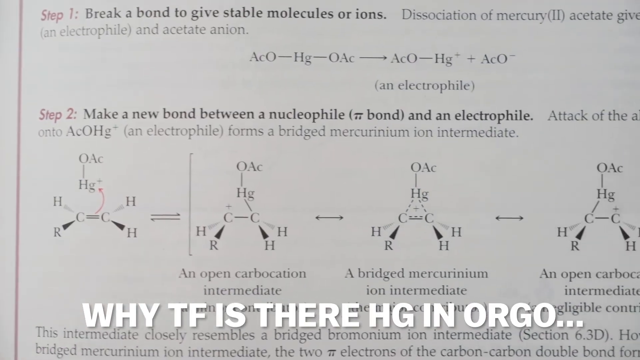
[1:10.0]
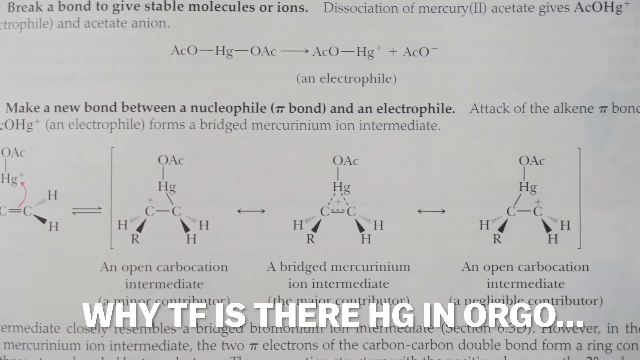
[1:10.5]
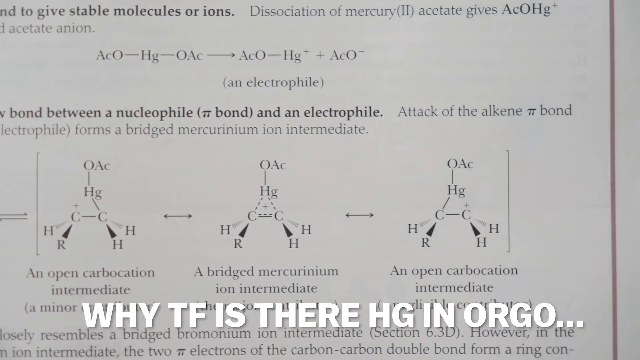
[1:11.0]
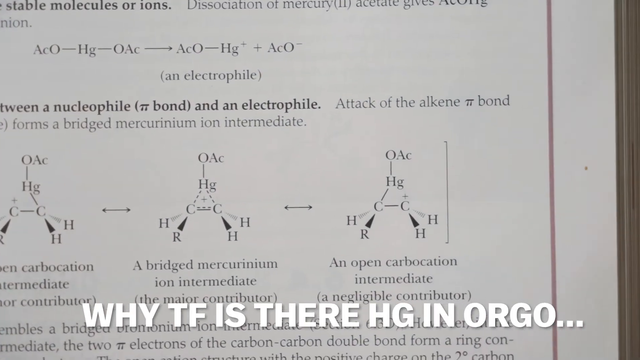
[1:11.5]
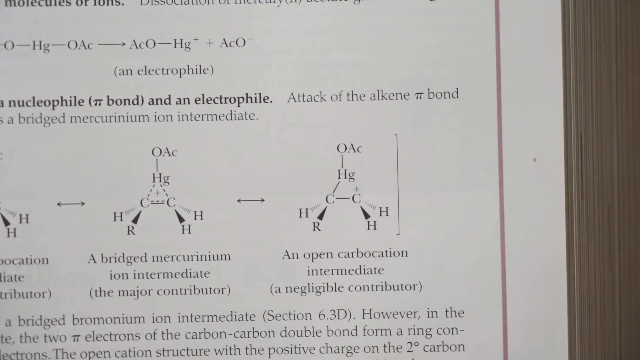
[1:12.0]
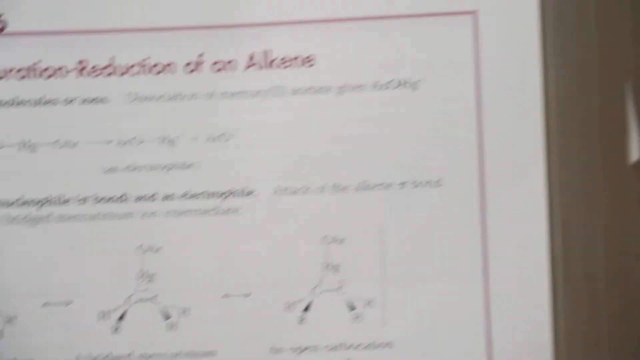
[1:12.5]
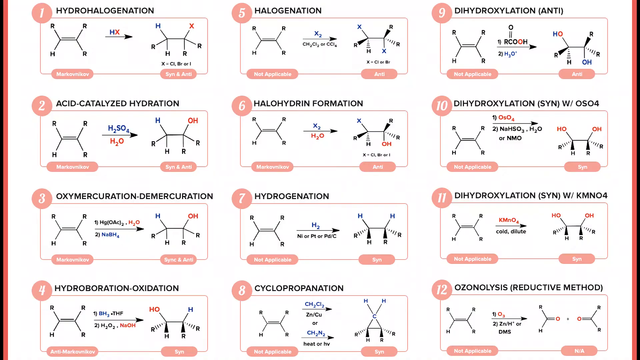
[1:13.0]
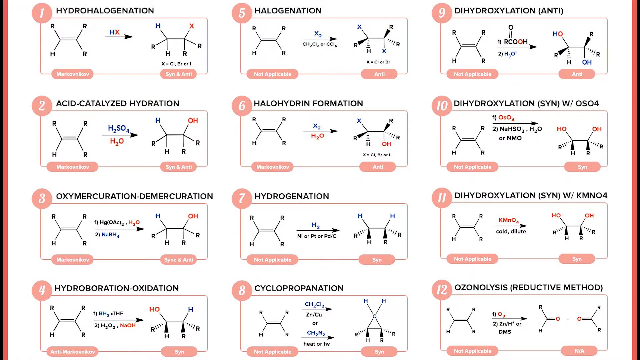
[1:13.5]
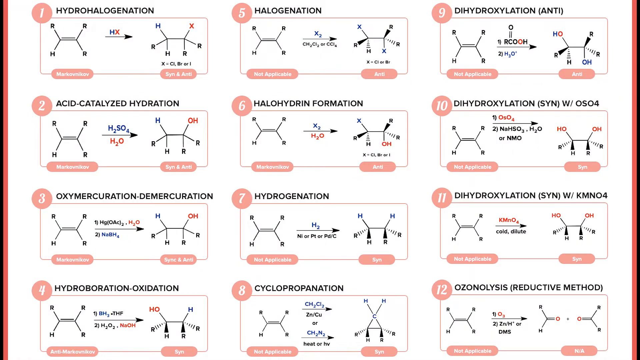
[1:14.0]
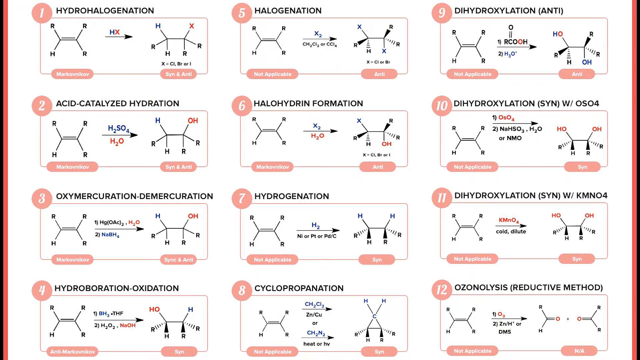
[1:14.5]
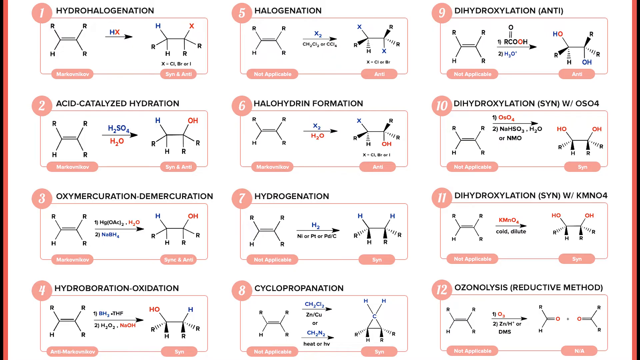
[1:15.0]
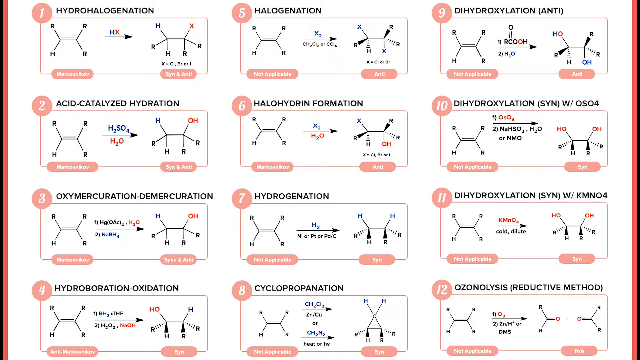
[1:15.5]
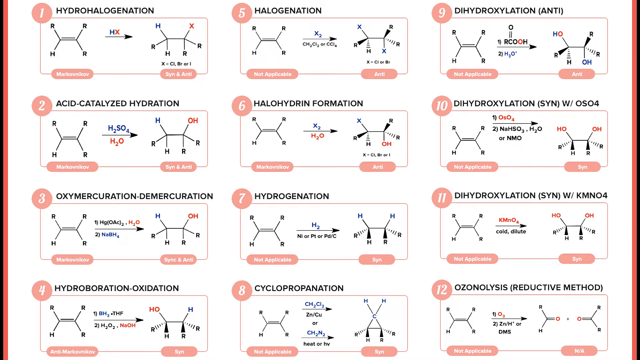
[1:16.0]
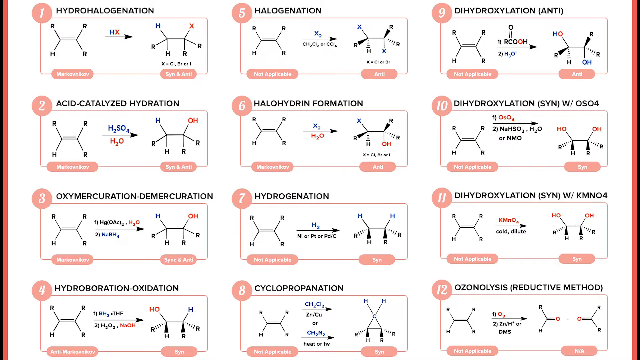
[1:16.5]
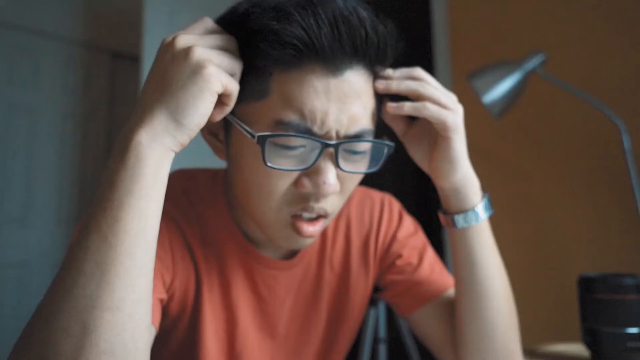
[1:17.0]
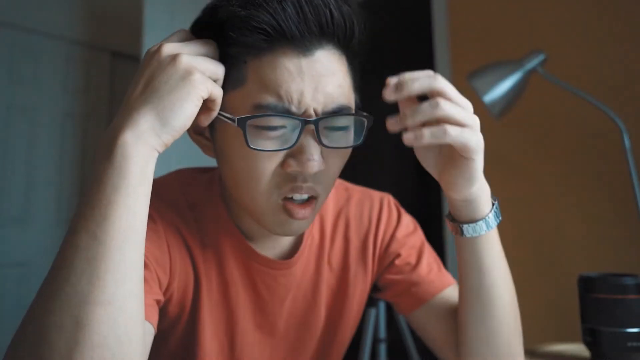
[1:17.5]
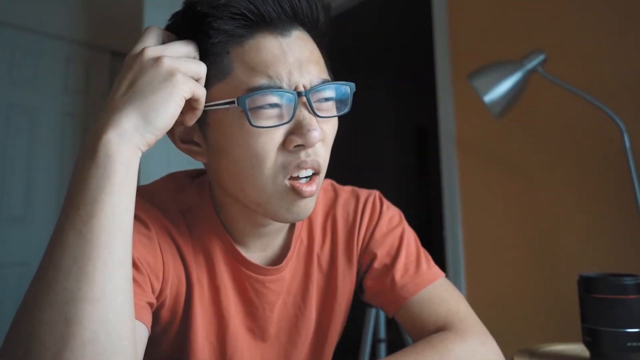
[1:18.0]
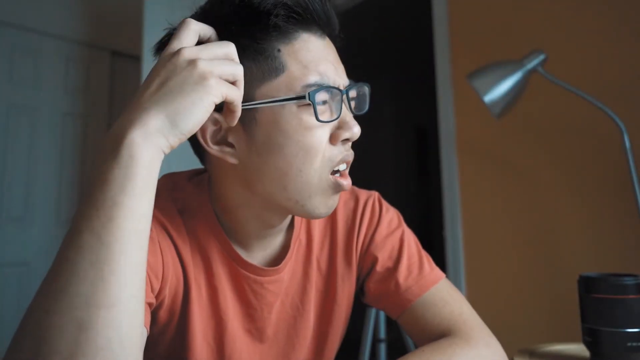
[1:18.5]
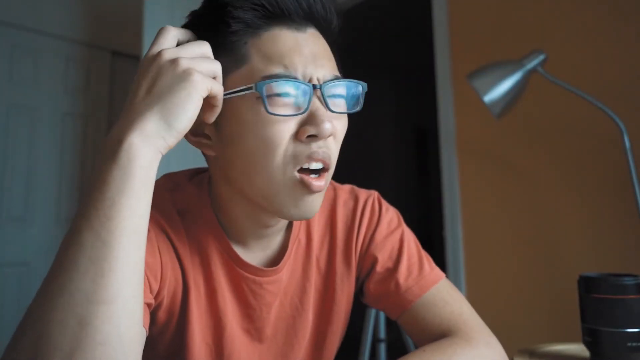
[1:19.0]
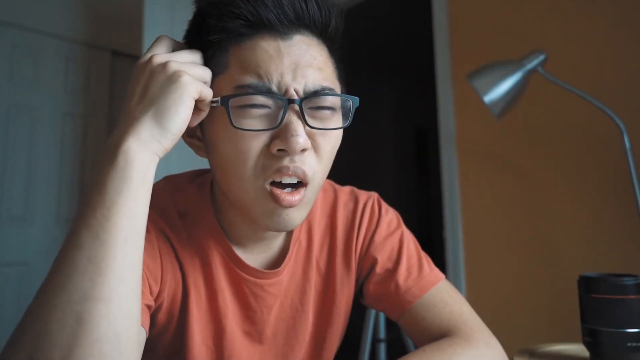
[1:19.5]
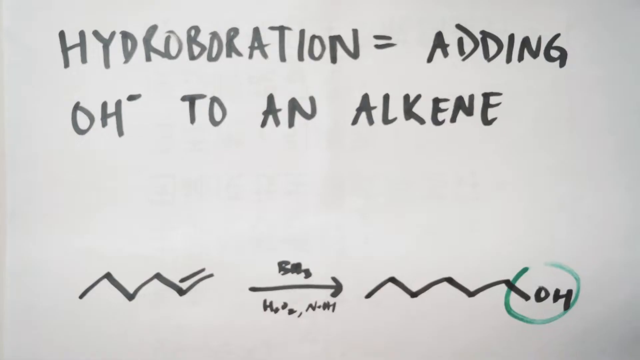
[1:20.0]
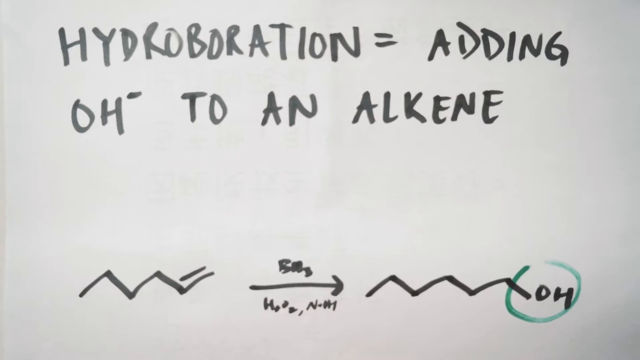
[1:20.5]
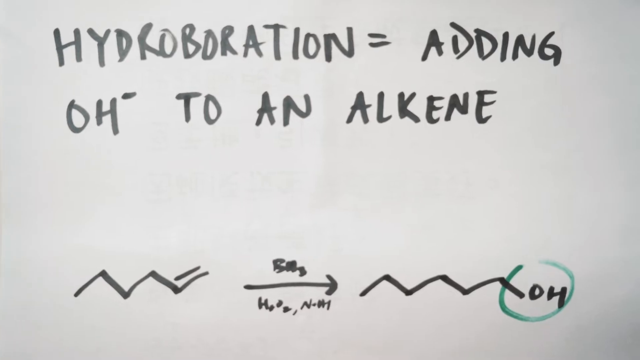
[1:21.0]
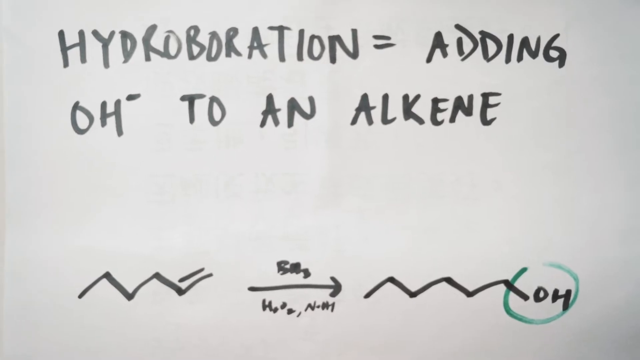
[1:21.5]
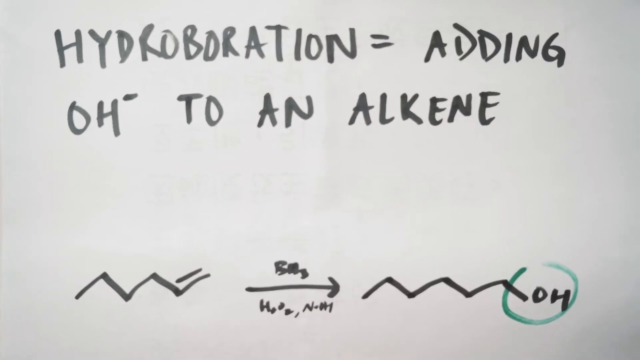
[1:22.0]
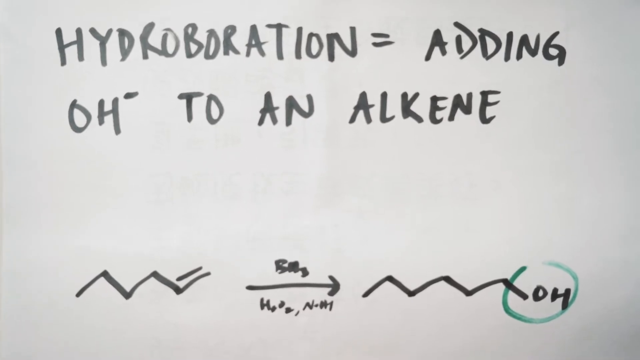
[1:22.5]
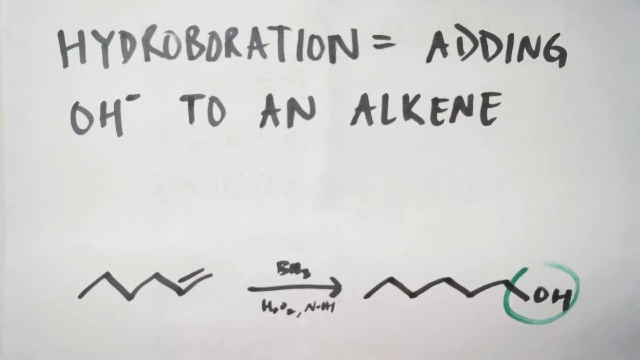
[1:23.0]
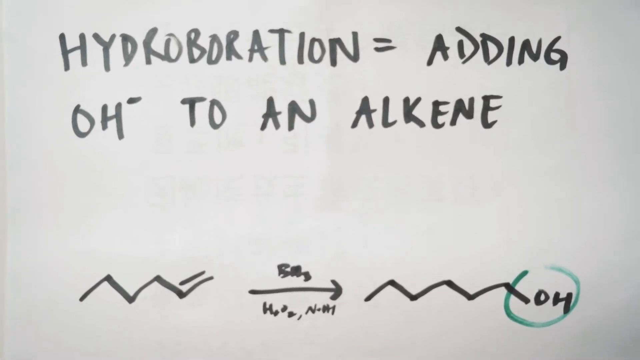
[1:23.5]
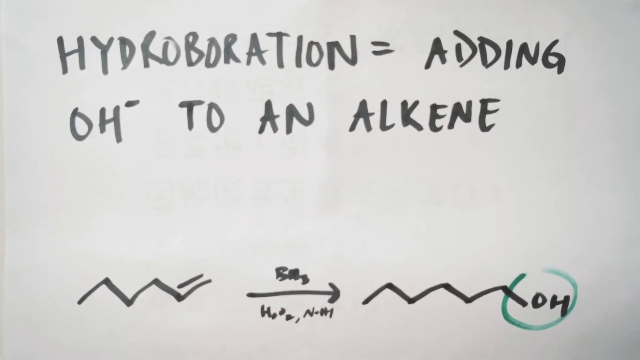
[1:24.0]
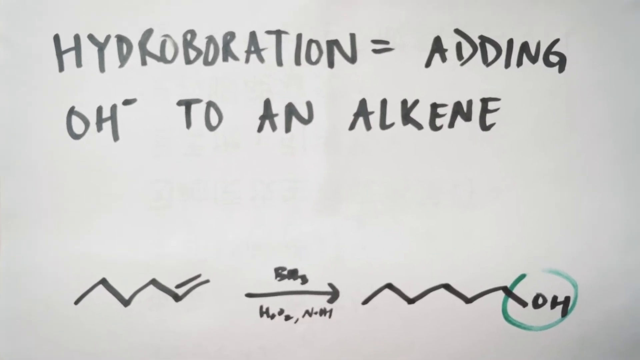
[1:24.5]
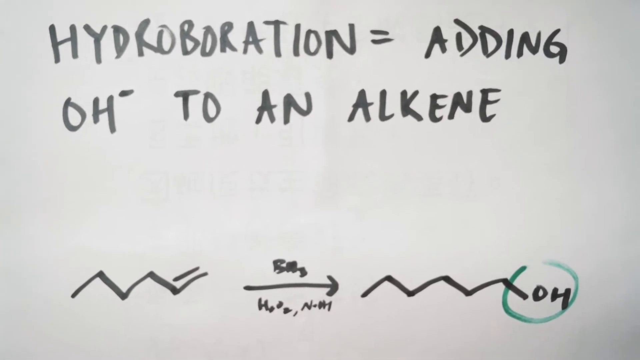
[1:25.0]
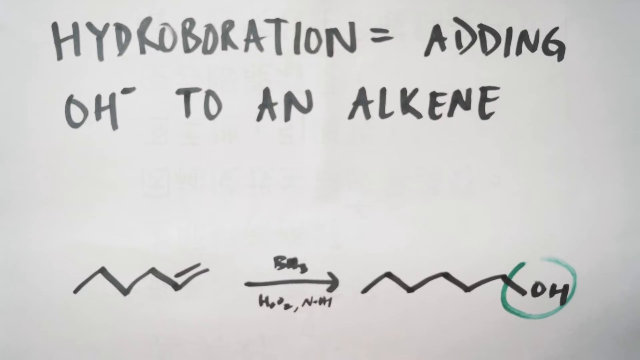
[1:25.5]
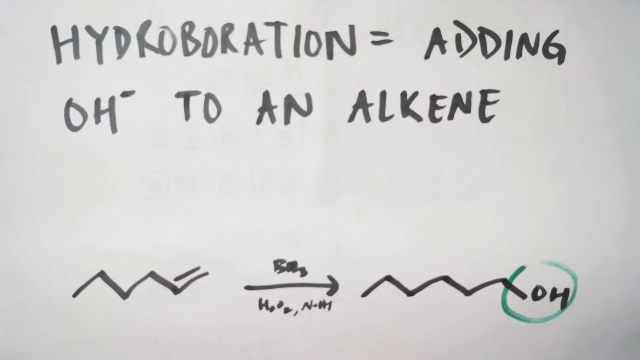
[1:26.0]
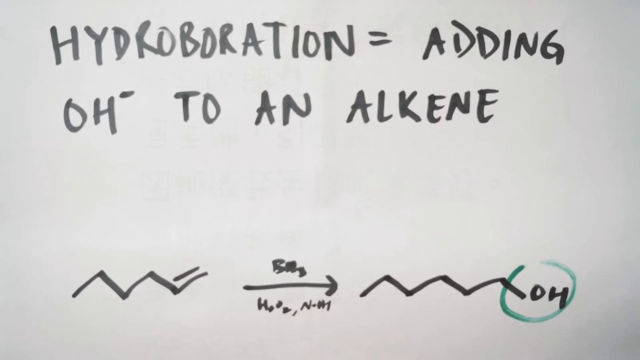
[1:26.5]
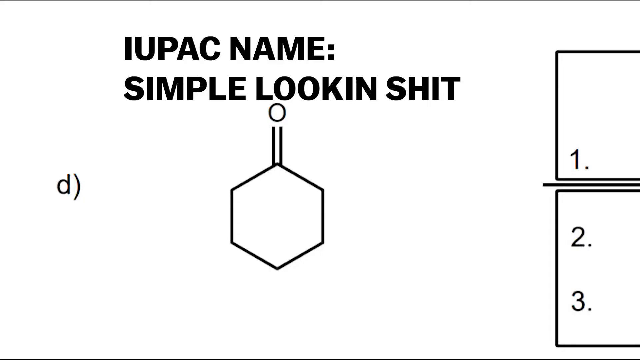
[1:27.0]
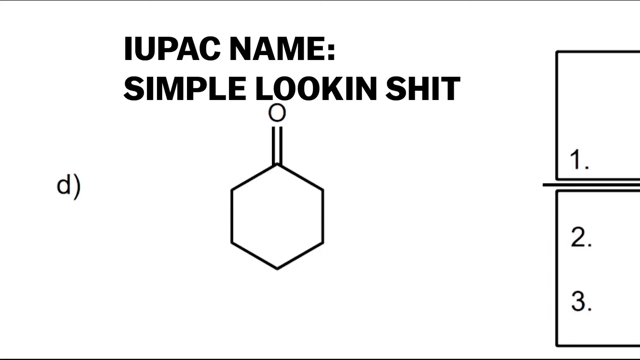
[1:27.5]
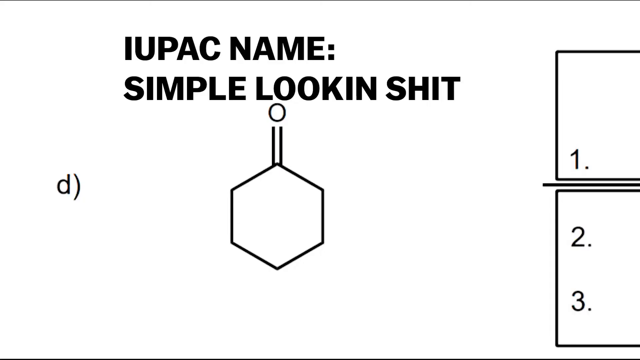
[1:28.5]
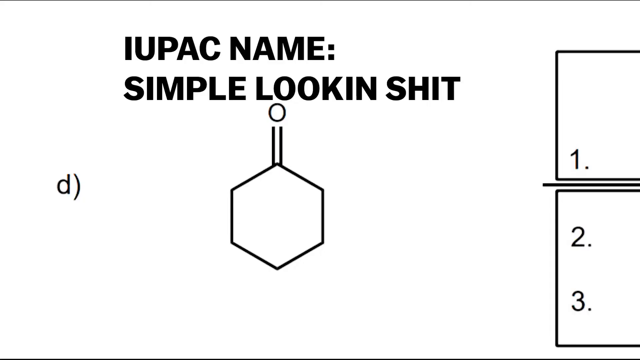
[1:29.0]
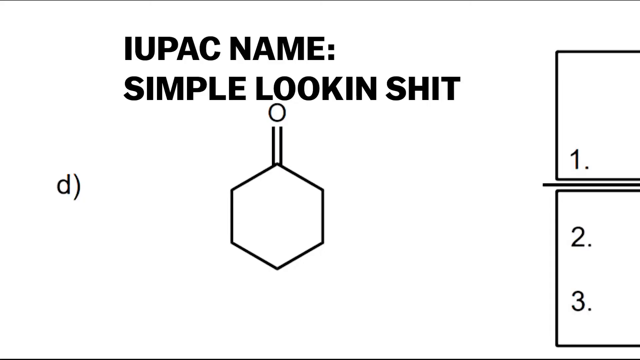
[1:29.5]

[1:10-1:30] The question "why the fuck is there Hg in orgo" is on screen, and the student seems confused. Many chemistry models show molecules transforming into other molecules through processes such as hydrohalogenation, hydrogenation and cyclopropanation. The student, extremely confused, looks over the horizon and scratches his head. A drawing board shows the text "hydroboration equals adding OH negative to an alkene", and a molecule goes through the process of hydroboration. Another molecule appears with the text "UPAC name simple looking shit".